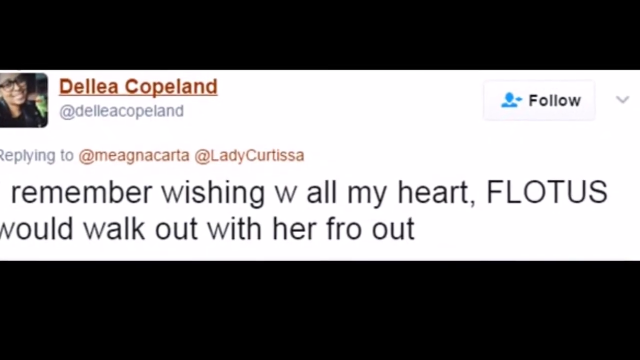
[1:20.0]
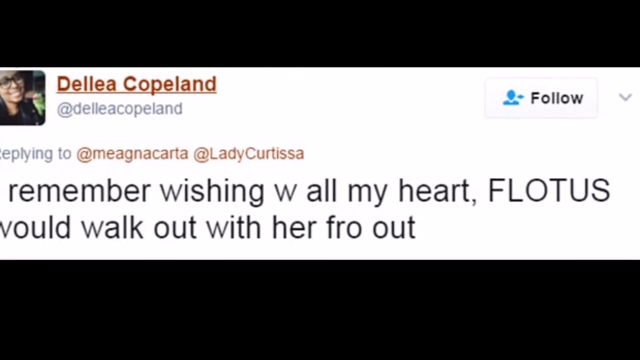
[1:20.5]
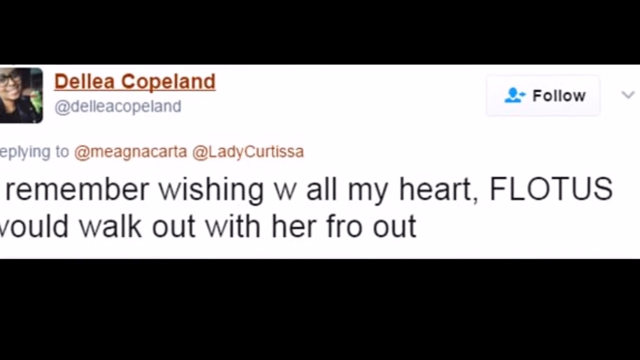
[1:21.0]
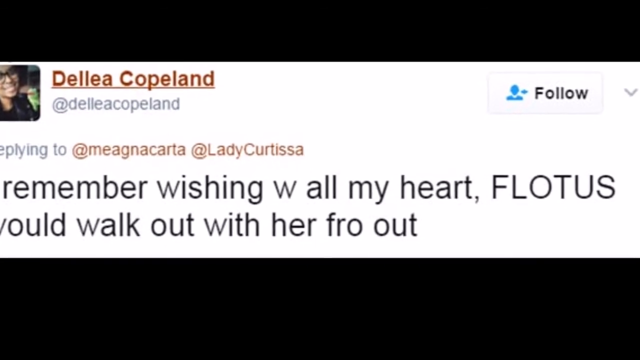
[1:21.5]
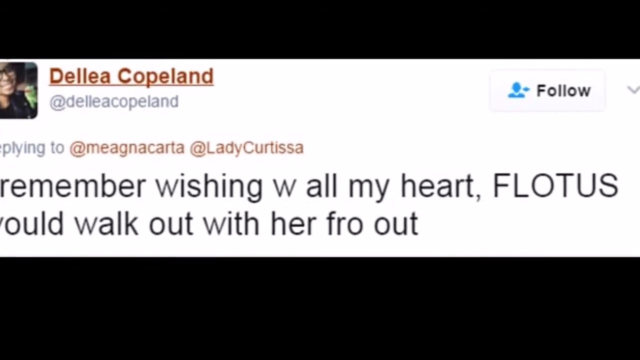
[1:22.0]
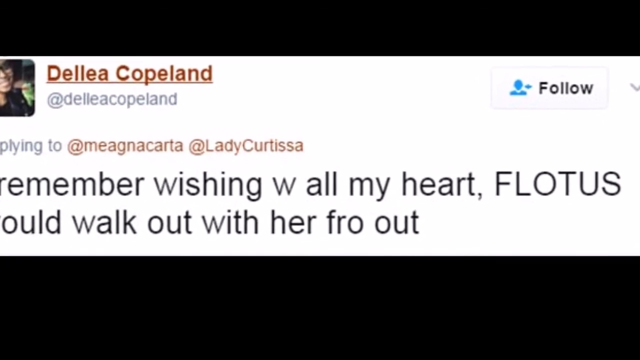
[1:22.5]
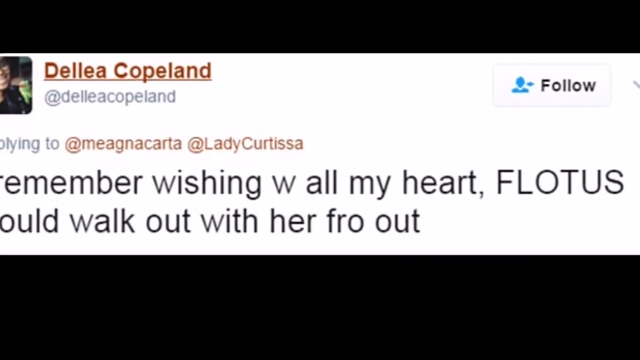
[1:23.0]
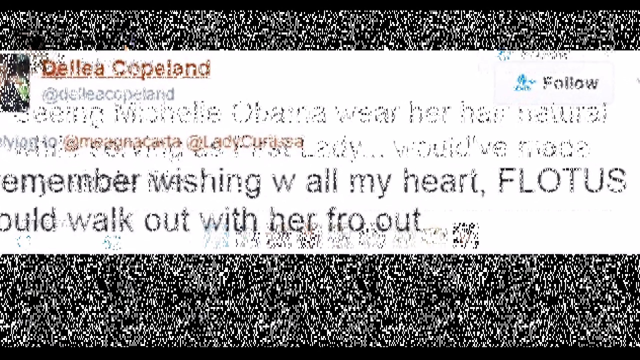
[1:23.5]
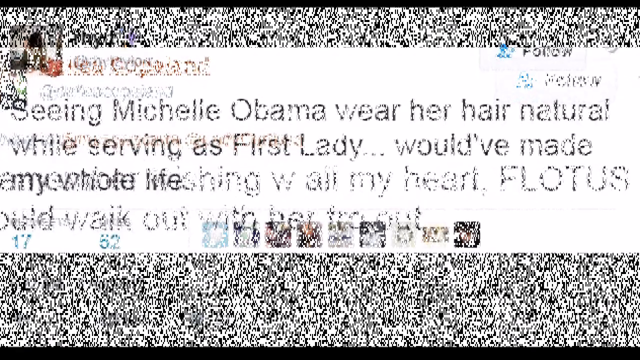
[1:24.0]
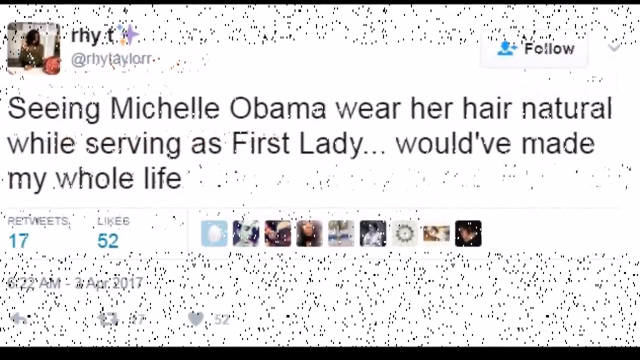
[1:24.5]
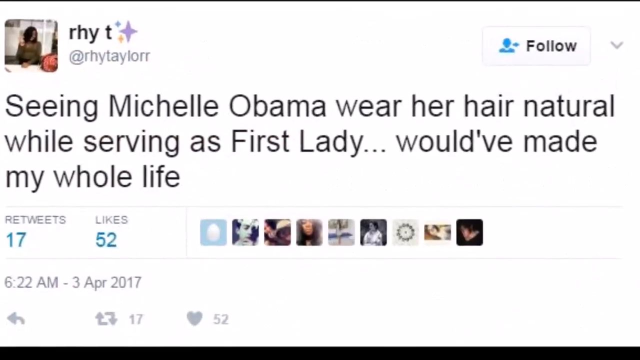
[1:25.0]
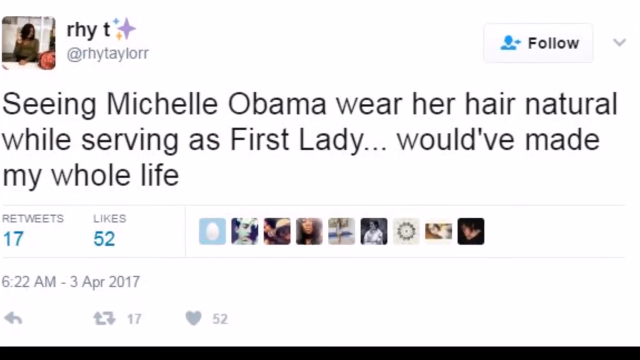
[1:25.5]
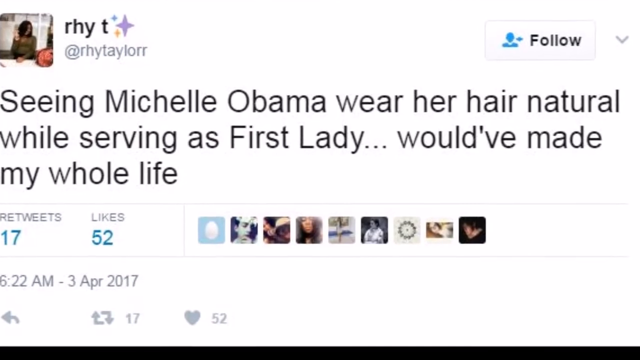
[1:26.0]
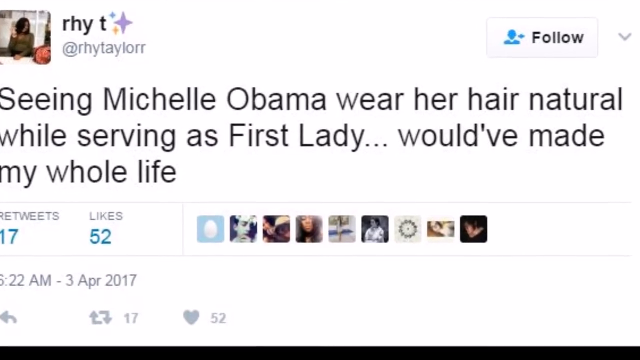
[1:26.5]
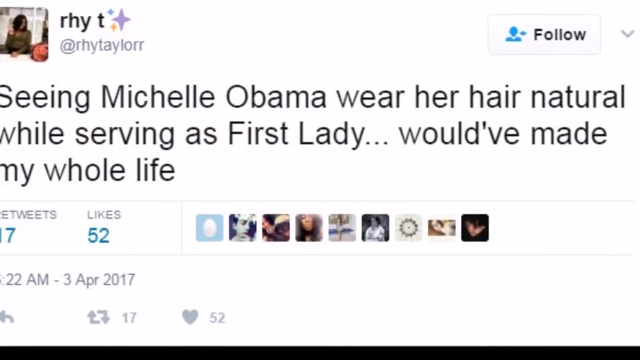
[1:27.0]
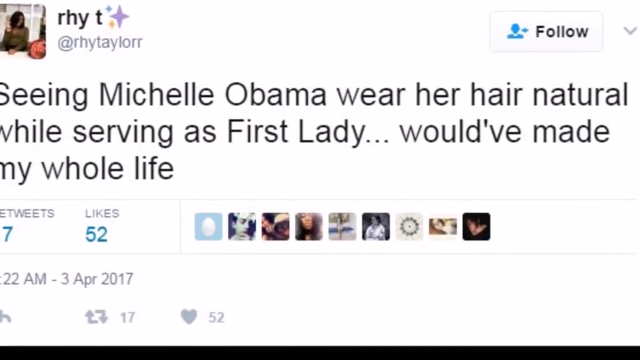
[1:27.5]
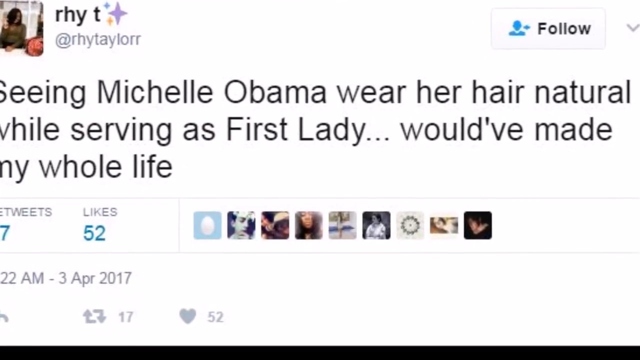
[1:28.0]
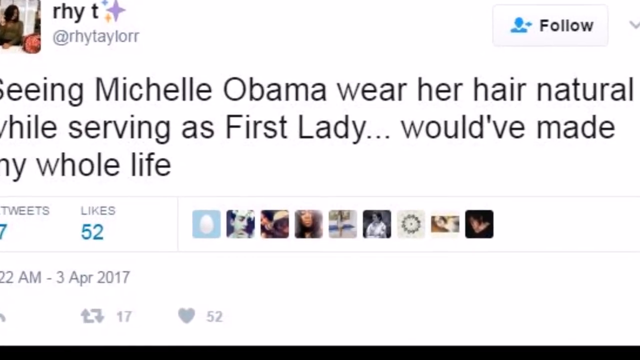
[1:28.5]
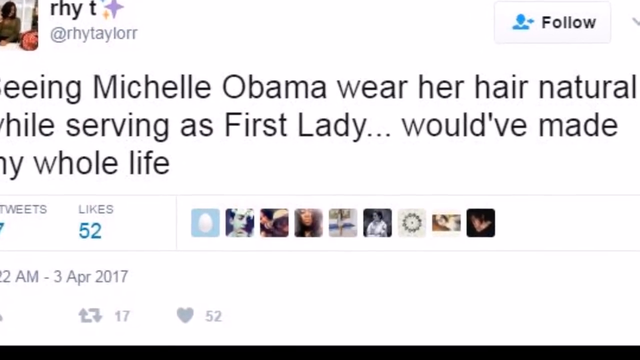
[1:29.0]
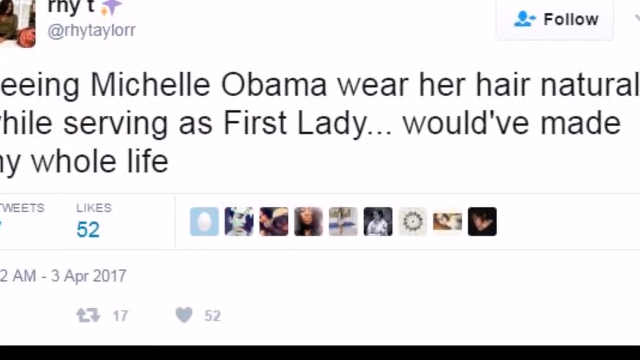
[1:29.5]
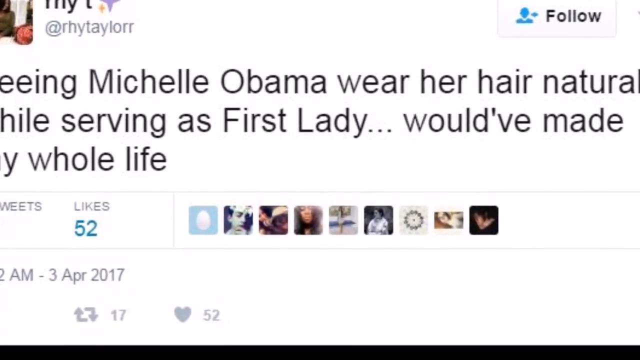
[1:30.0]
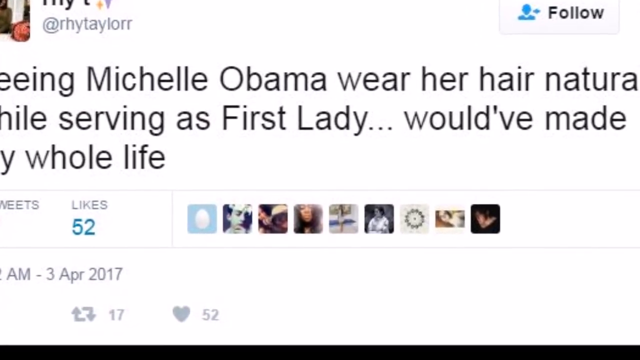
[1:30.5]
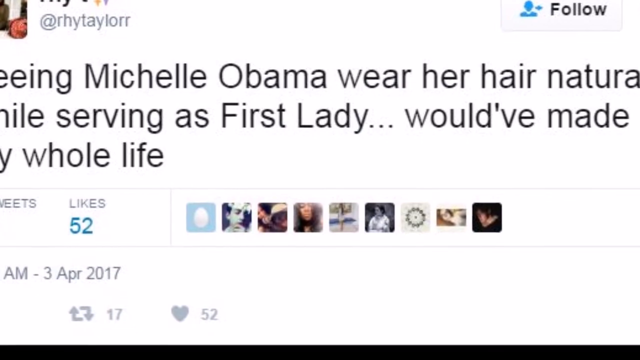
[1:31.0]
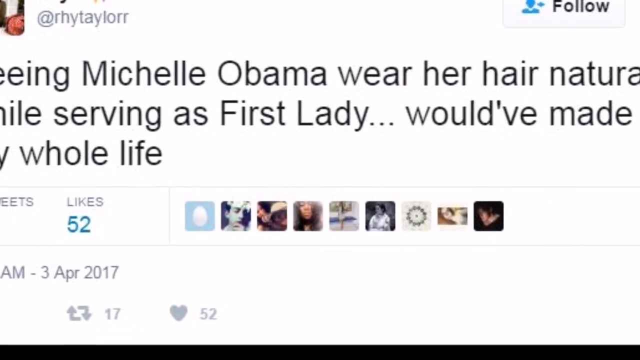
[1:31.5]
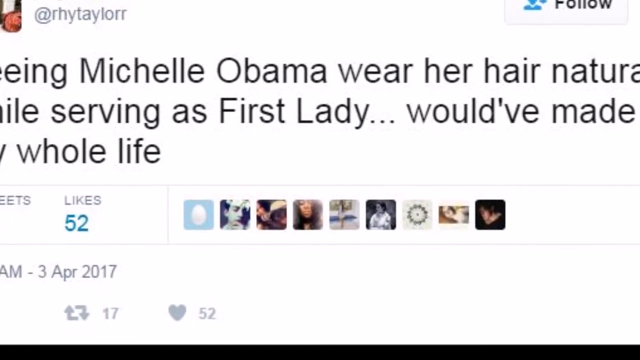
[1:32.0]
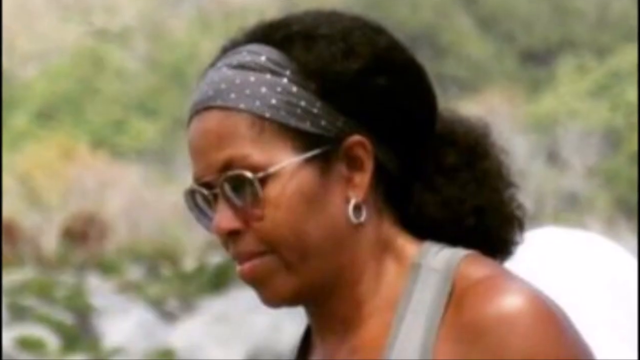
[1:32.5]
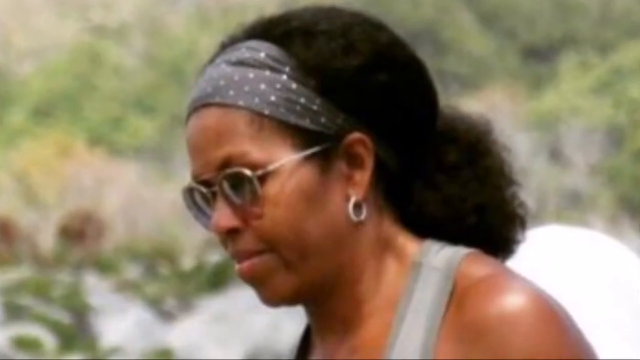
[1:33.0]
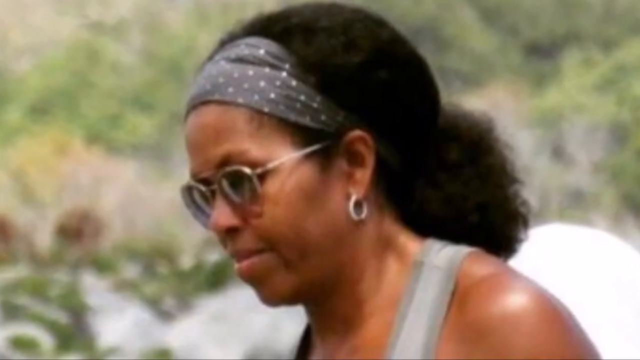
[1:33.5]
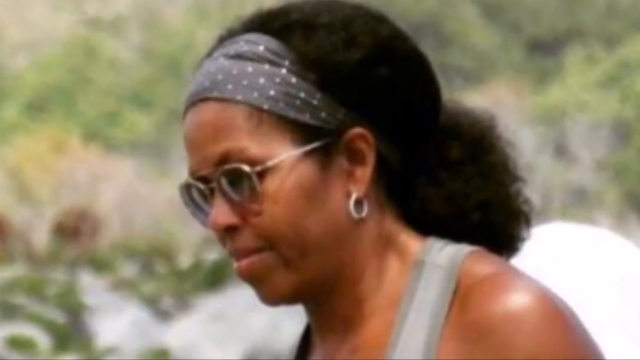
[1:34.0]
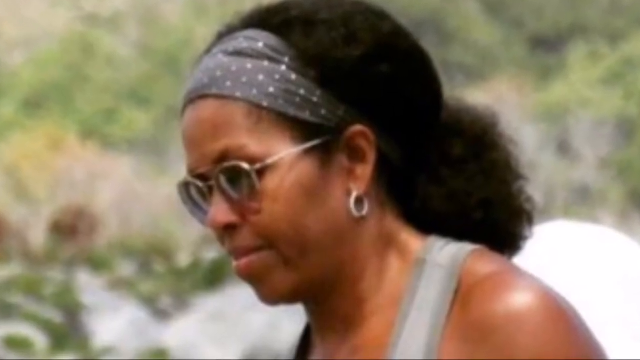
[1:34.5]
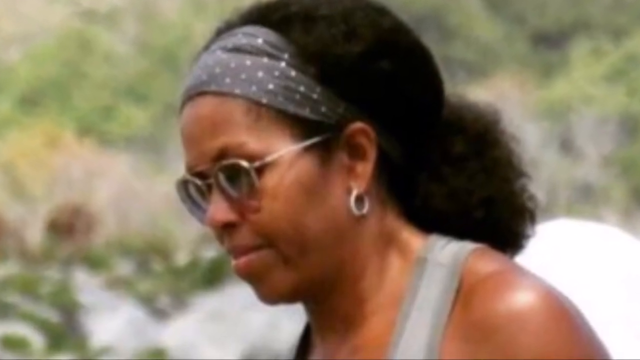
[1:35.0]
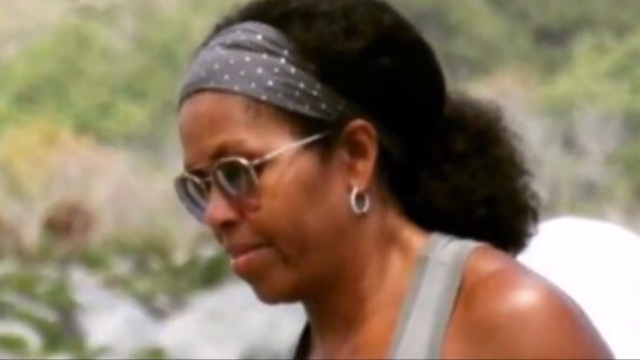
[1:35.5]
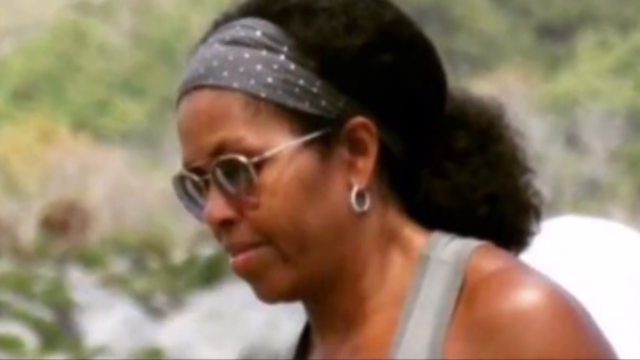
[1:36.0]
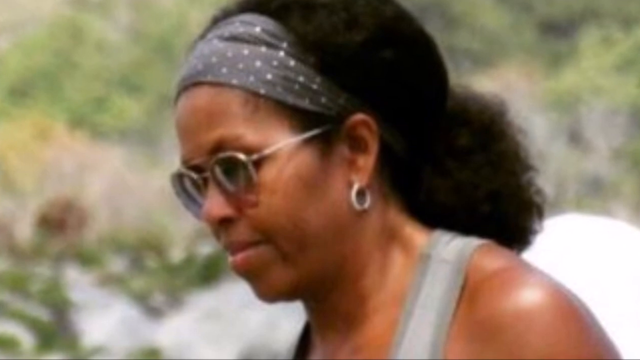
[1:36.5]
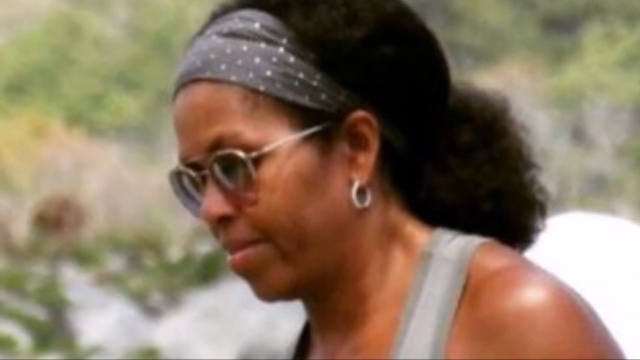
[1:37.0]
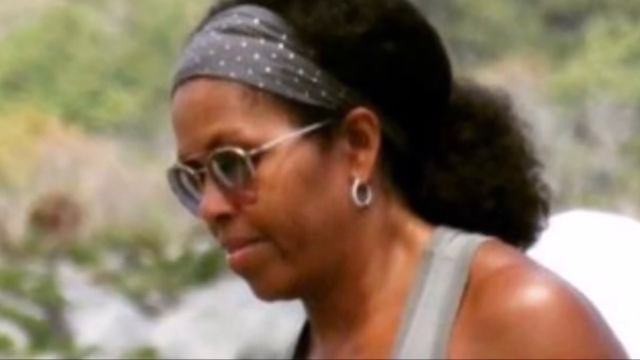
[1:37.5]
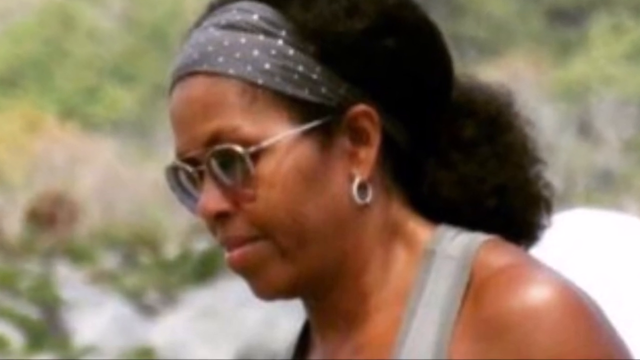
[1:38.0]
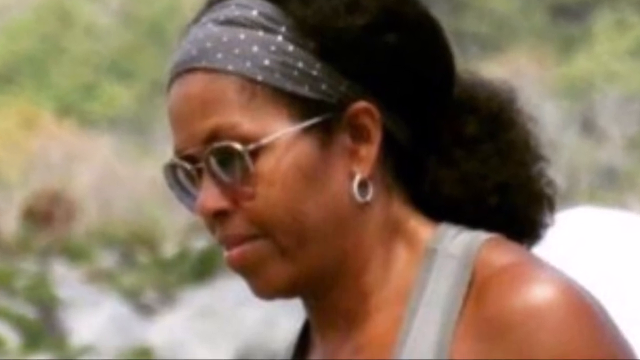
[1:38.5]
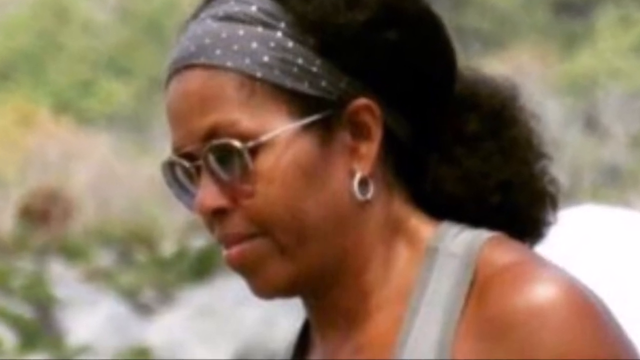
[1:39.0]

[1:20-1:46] A post by Delia Copeland reads "I remember wishing" and "FLOTUS would walk out". Above the post, the word "follow" is at the top right and the poster's picture is at the top left. The post seems to zoom in while another post appears reading "seeing Michelle Obama wear her hair natural while serving as First Lady would have made my whole life." The post shows 17 tweets and 52 likes, and the date it was posted: 6:22 a.m. on 3rd April 2017. Then a picture of Obama with glasses is shown, zoomed out so it can be seen clearly. The lady wears a satin cloth on her hair, a durag, and a grey top.